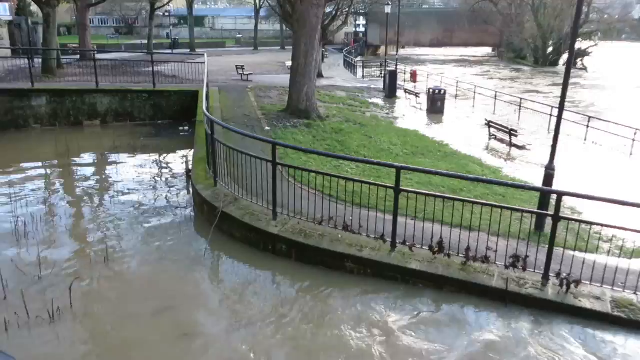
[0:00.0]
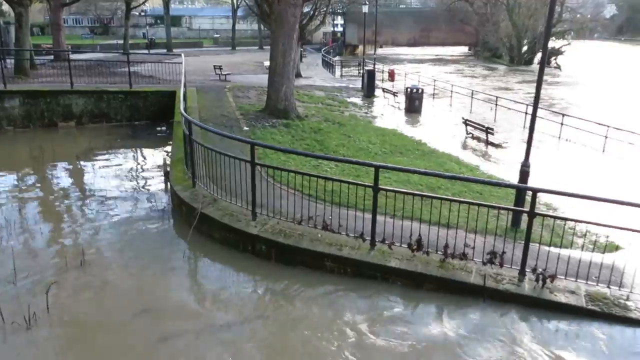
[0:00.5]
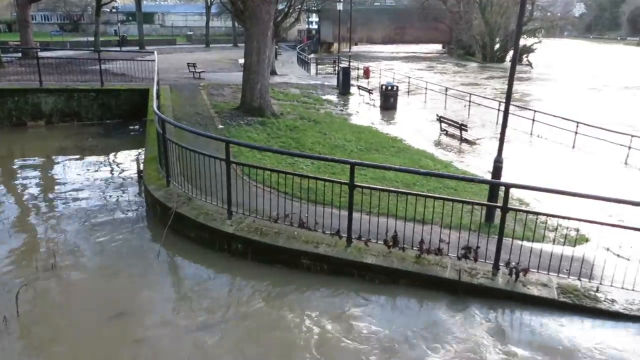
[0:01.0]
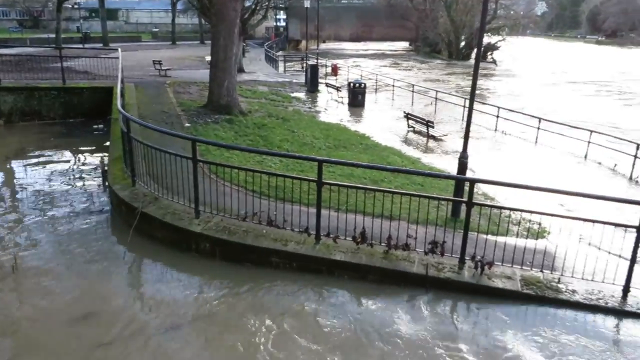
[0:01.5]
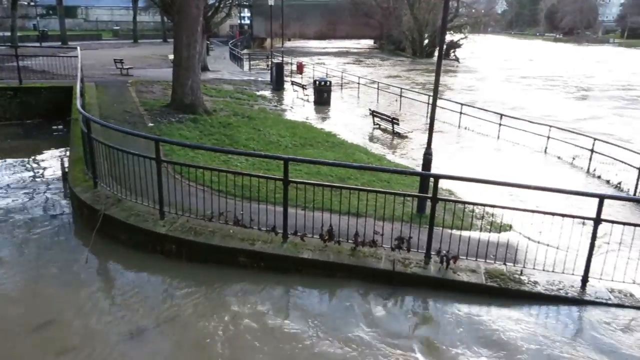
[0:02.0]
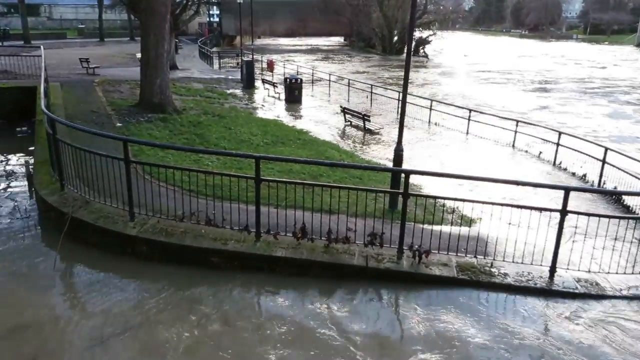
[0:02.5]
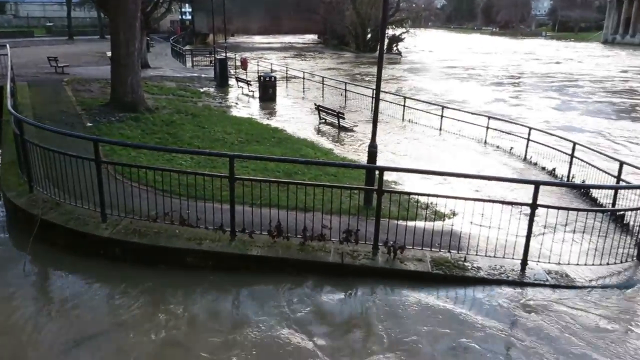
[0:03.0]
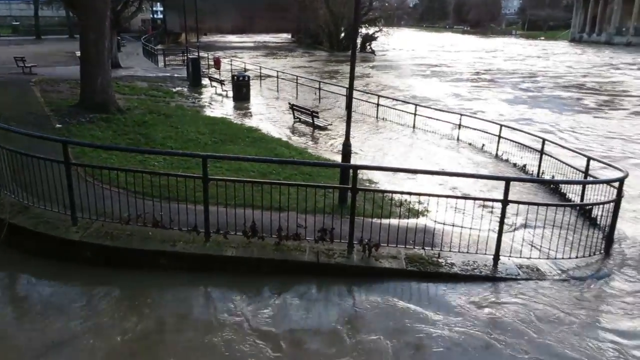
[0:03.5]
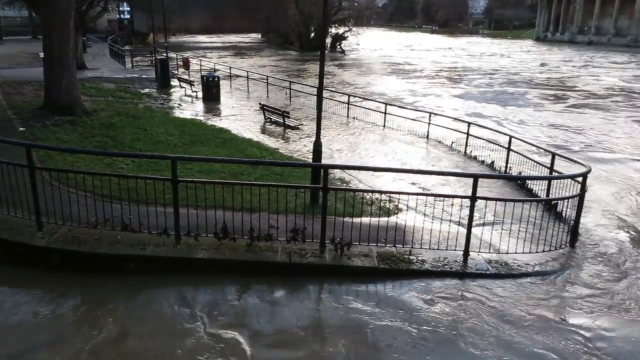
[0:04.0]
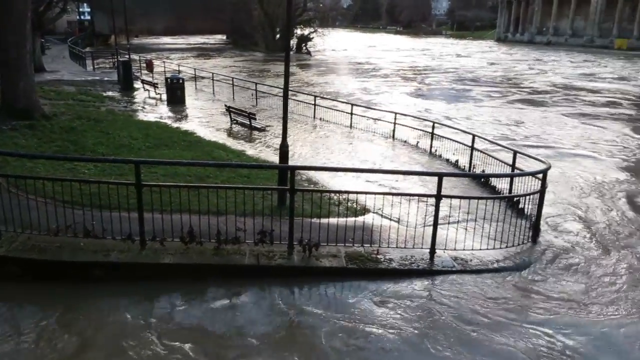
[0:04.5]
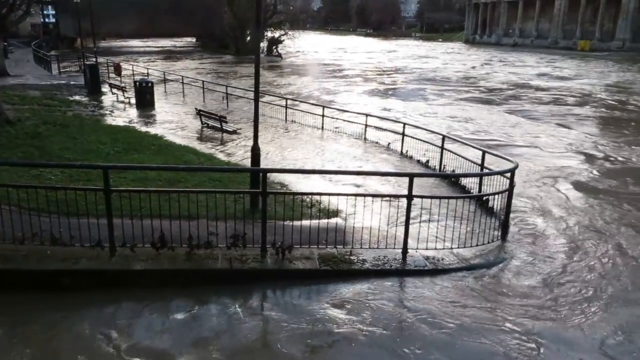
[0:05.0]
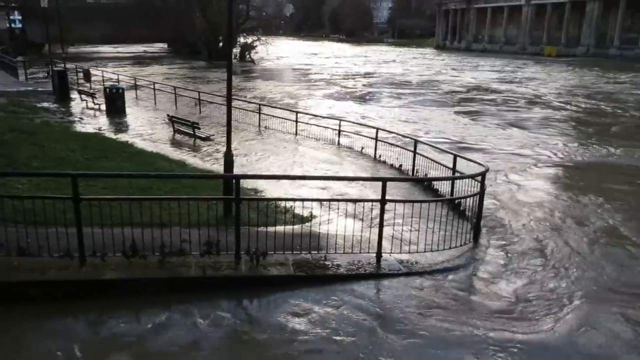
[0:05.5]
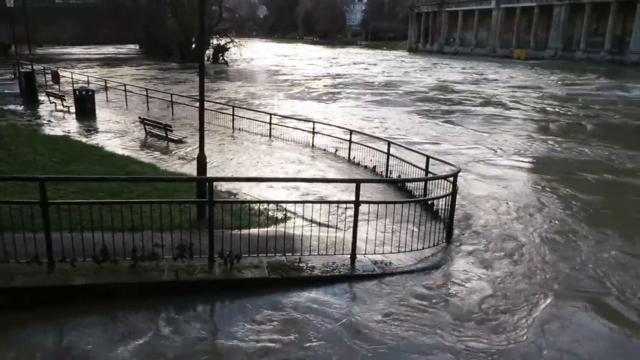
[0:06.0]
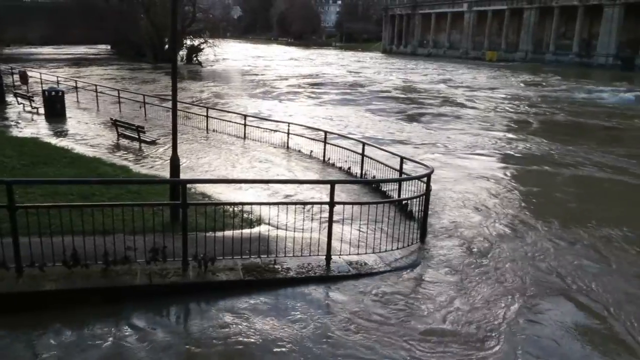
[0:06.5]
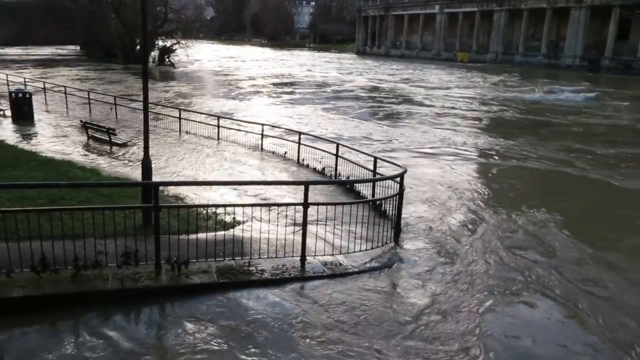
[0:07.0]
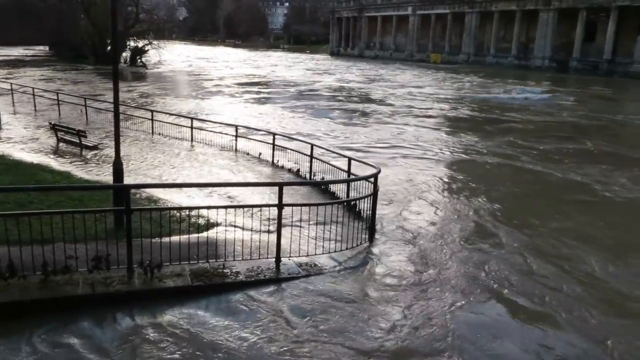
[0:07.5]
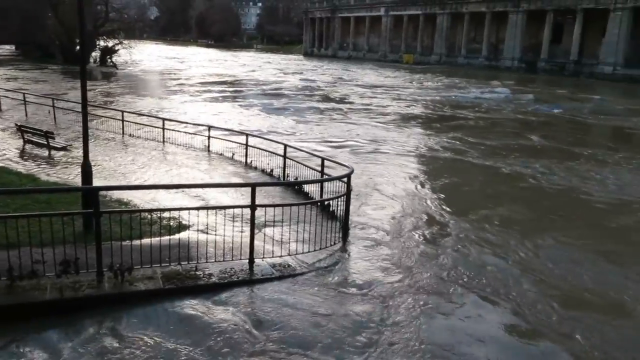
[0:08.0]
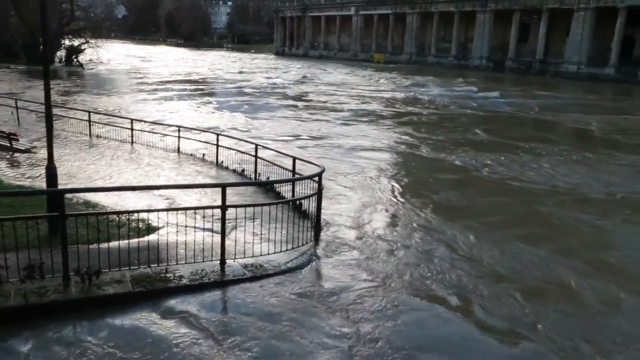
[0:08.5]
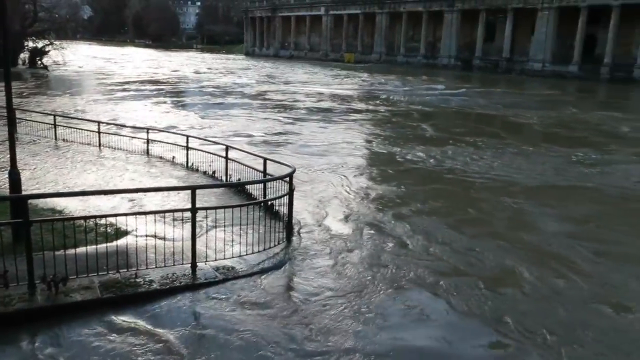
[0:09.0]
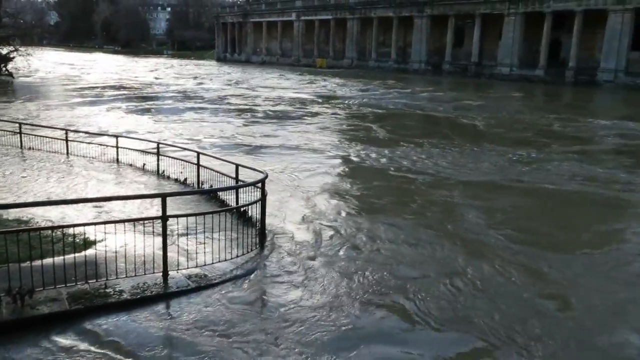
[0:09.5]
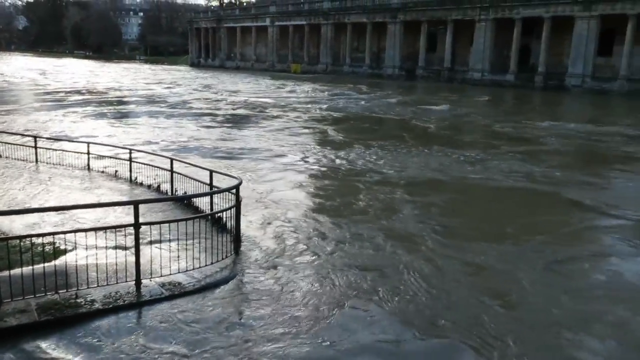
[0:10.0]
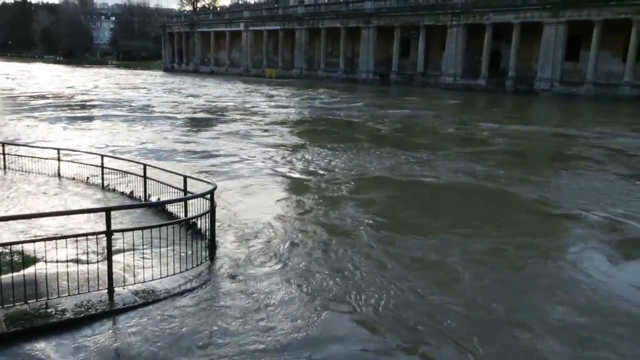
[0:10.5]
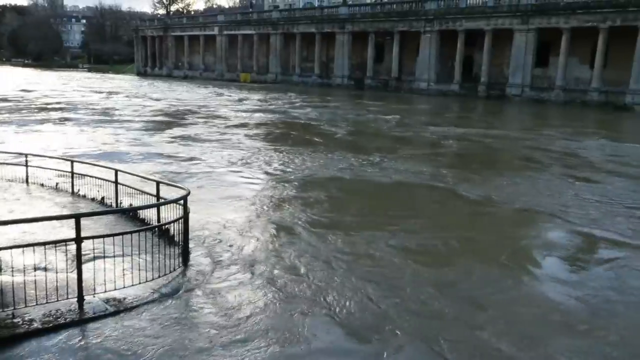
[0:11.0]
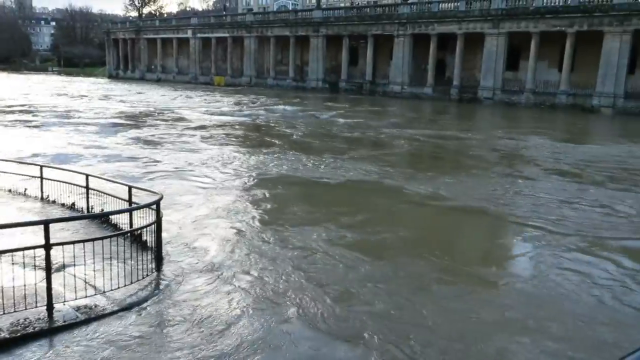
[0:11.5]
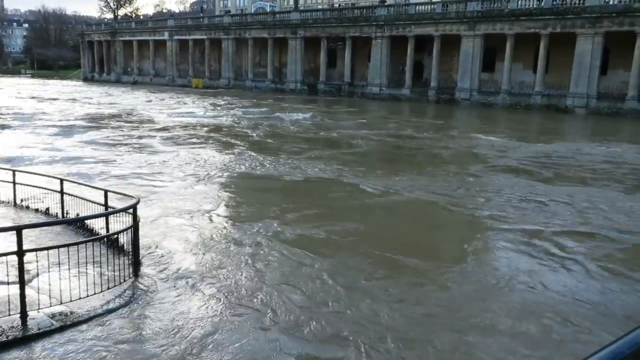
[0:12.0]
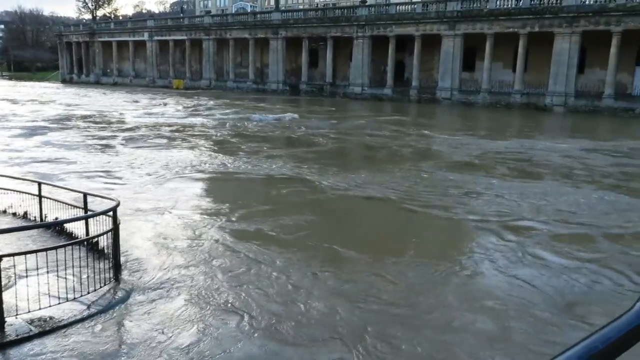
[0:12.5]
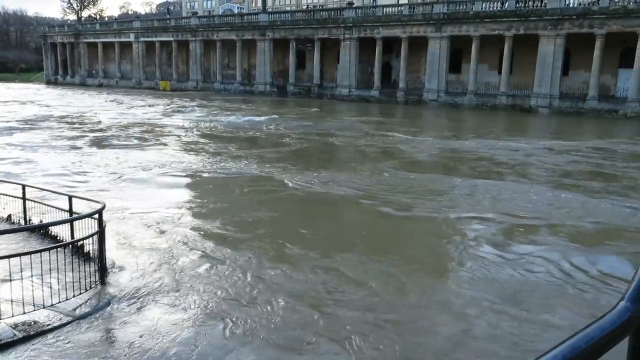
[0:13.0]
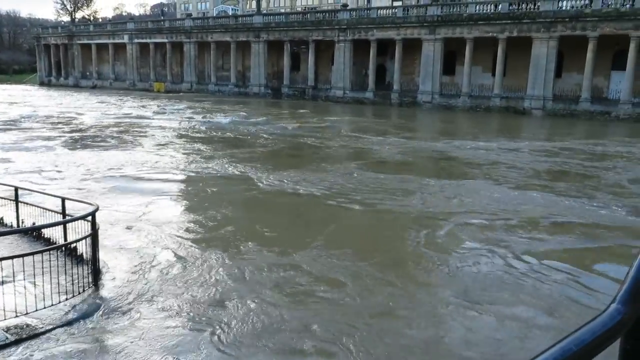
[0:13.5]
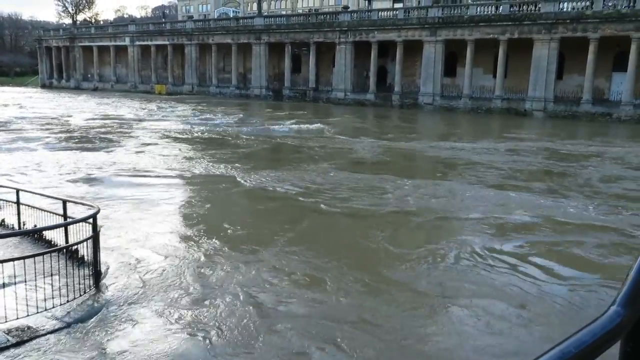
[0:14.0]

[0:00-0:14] What seems to be a recording of a park area shows a railing that contours the park, with kind of brownish water outside it. Inside the park there are trees and benches. The water from outside seems to be seeping inside, with a kind of elevated water level that is already reaching one or two of the benches. There is a lot of water flow in an area that looks like it maybe wasn't meant to have this much, since a building structure with pillars is right next to the water. The water flows from right to left.